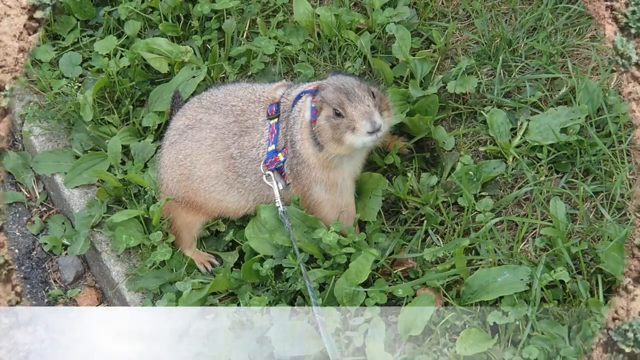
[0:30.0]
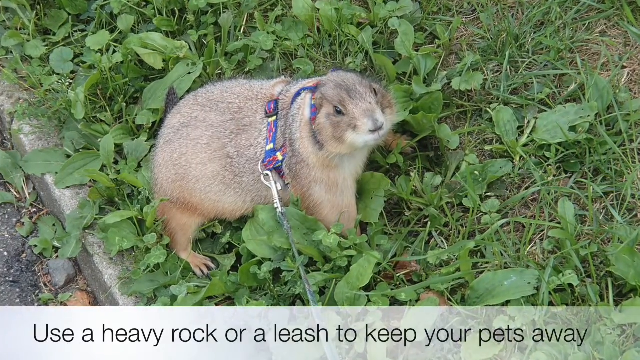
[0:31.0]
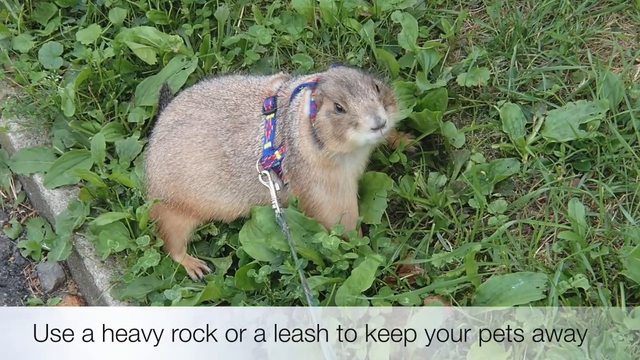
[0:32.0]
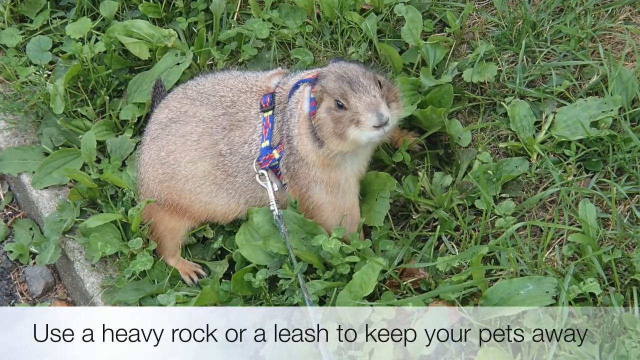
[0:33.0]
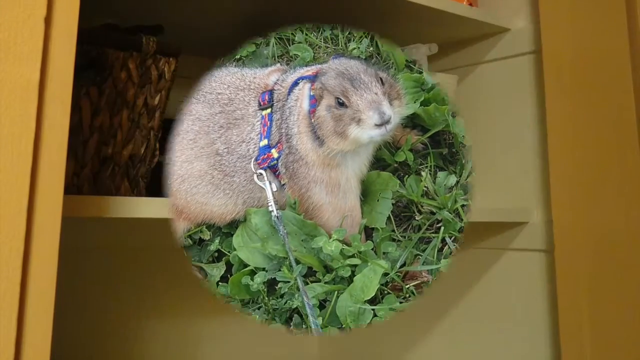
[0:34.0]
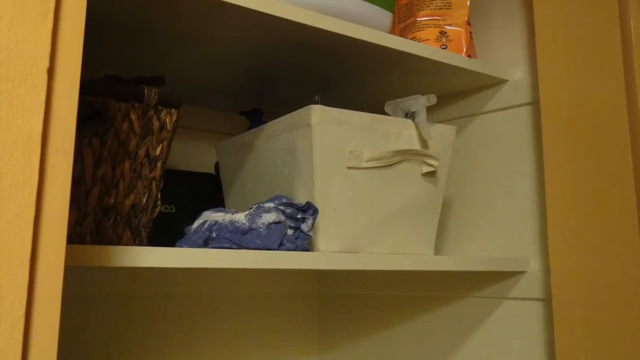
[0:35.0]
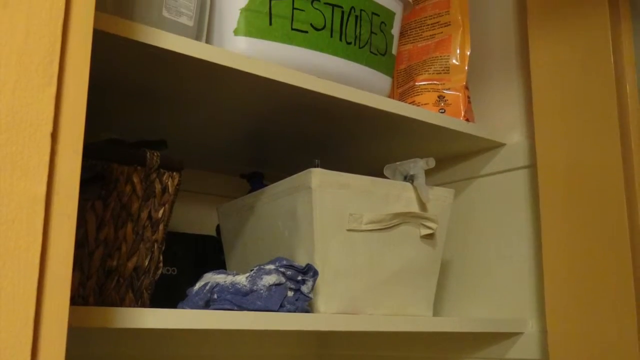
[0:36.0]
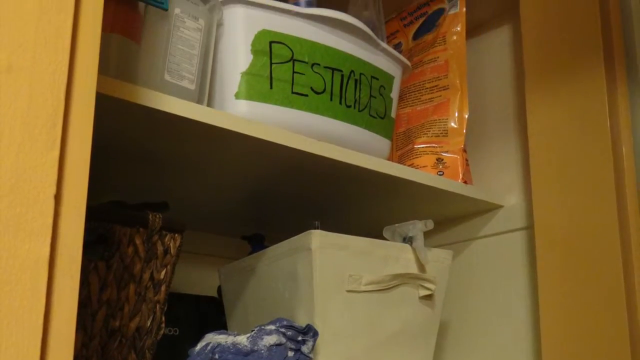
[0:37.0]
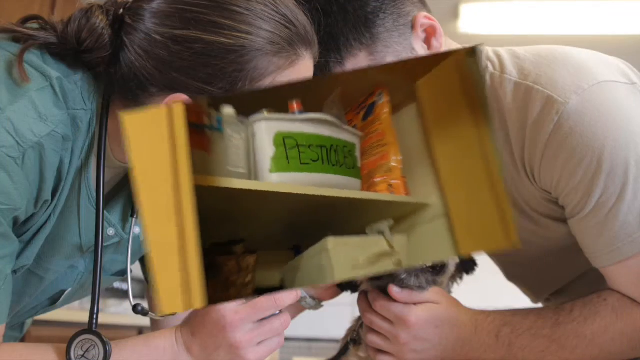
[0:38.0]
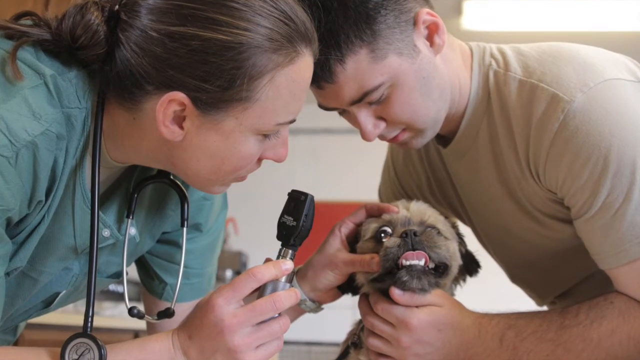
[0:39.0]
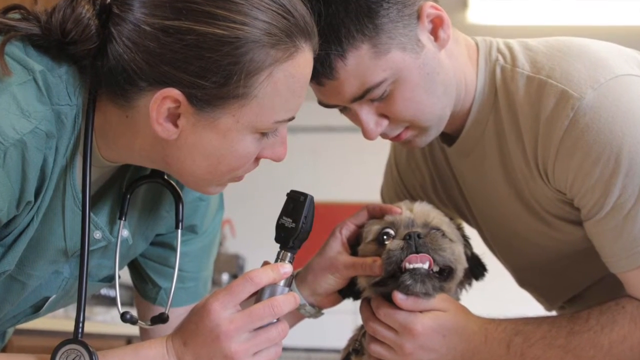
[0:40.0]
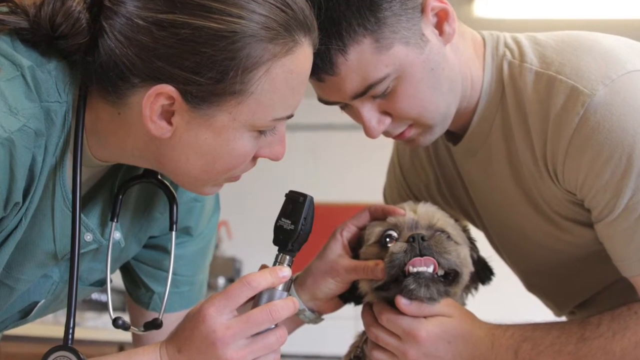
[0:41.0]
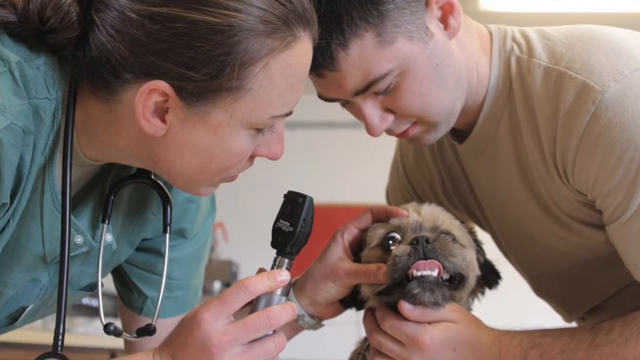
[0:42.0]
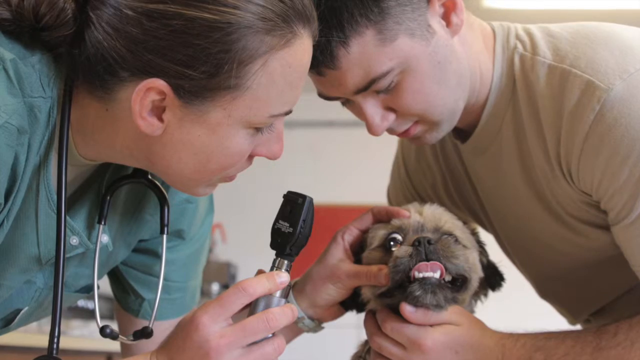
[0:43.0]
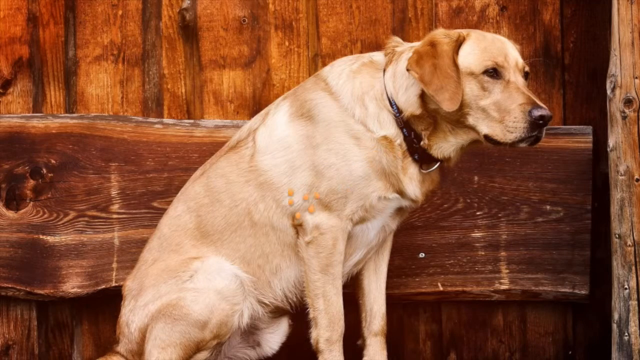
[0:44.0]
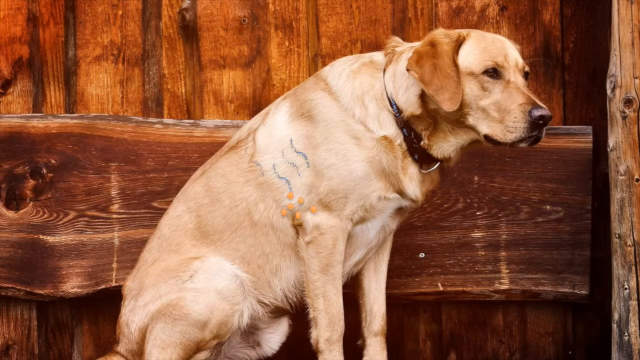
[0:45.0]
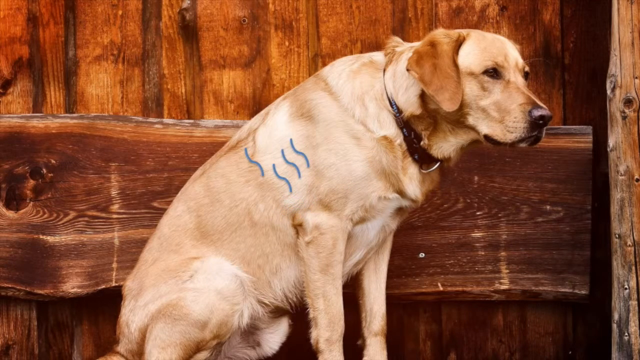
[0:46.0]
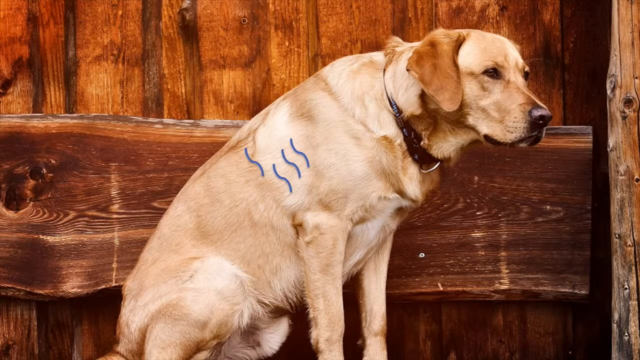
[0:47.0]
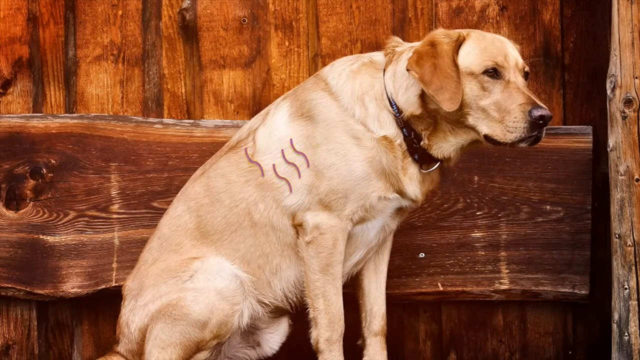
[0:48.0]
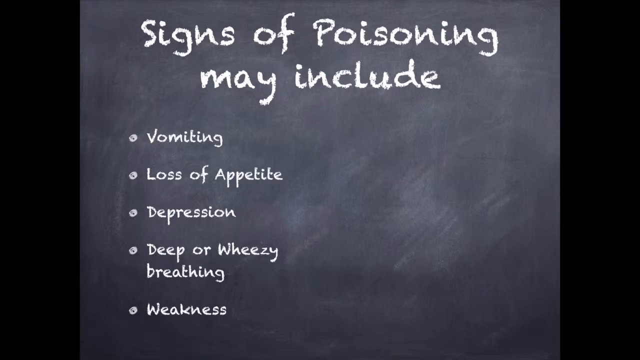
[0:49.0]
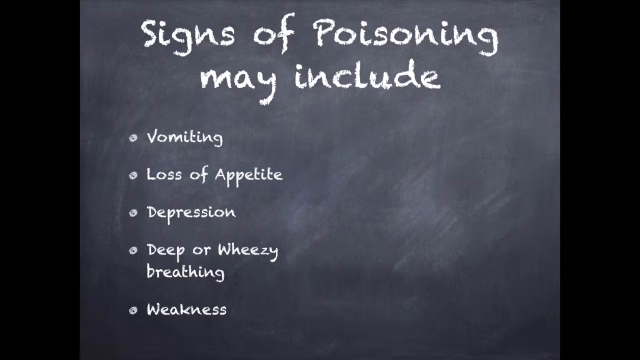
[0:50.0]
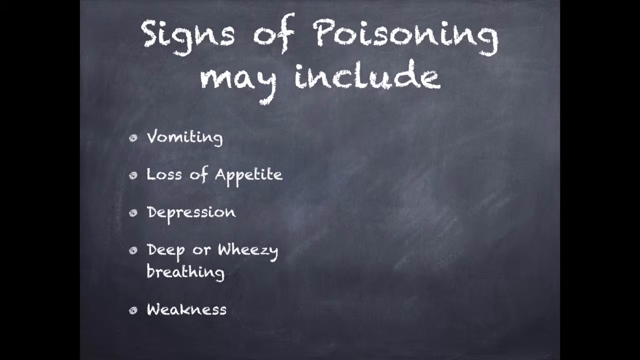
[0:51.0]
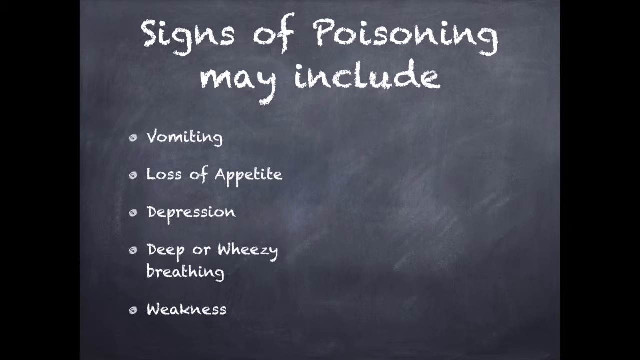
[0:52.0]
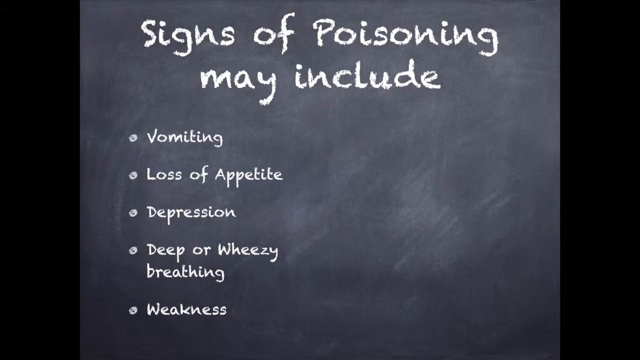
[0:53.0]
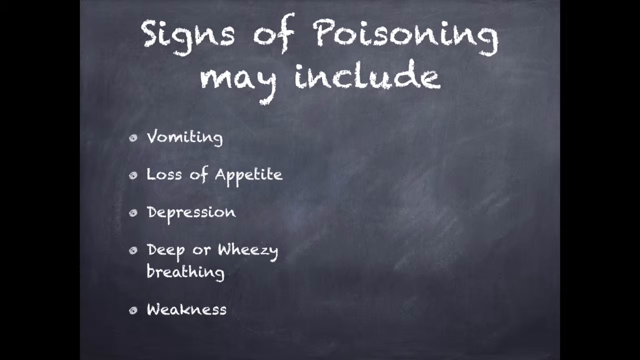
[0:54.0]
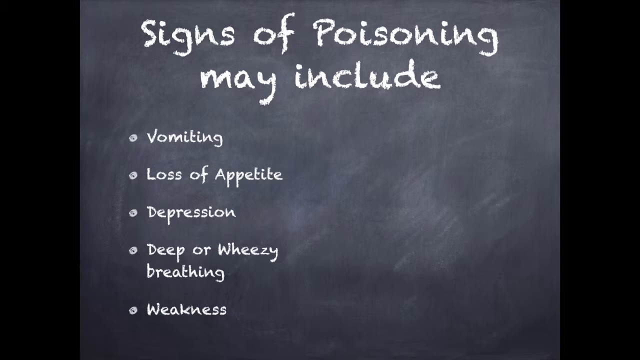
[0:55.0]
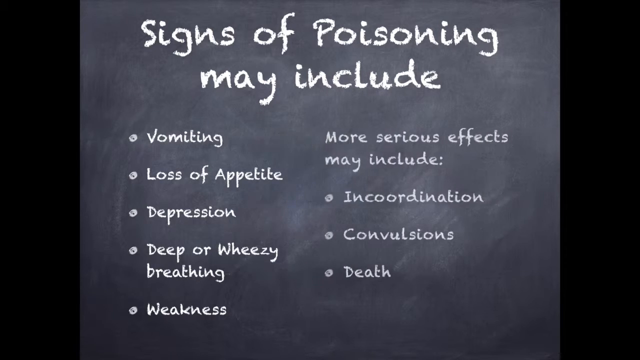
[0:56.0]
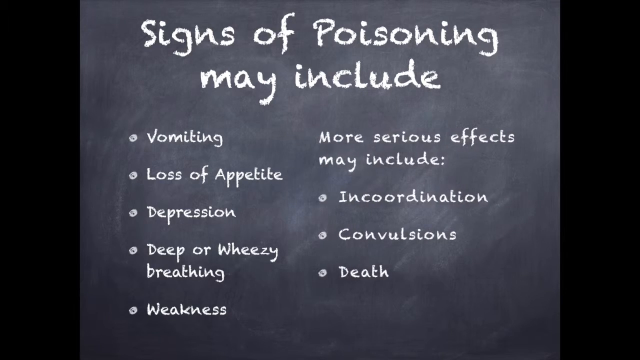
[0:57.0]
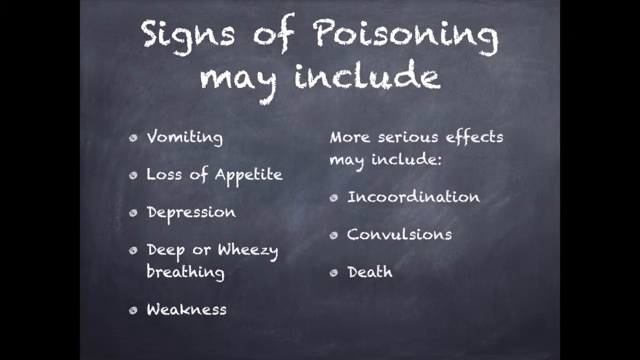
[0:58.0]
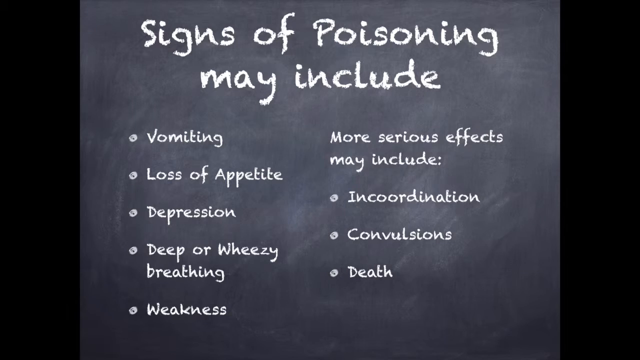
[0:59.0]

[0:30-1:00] A still image shows what seems to be some kind of groundhog in a leafy green garden with various weeds and grass next to a gray curb. Around it is a pink and blue harness, with a pet leash attached to one of the harness hooks. The screen transitions to a pantry closet with multiple shelves. On the bottom shelf is a fabric bin with multiple spray bottle heads pointing outward, and the camera pans upward over multiple other items in the closet. There is a large white bin with tape on the front, with marker on the tape reading "pesticides," and next to it a large orange plastic bag. The image fades toward the center in a transition to a vet, a woman, with a man. The man holds a dog while the vet looks at the dog's eye using an examination device, holding the eye open with her left hand. The video cuts to a still image of a Labrador sitting on its hindquarters.